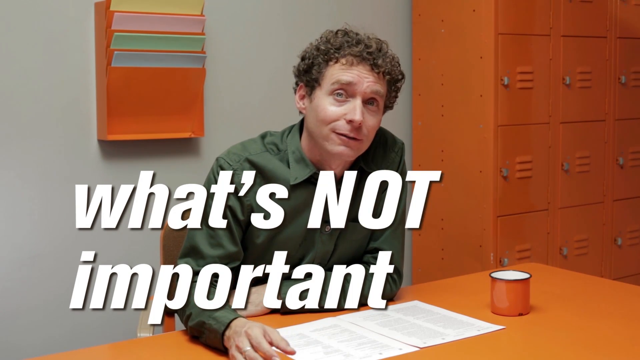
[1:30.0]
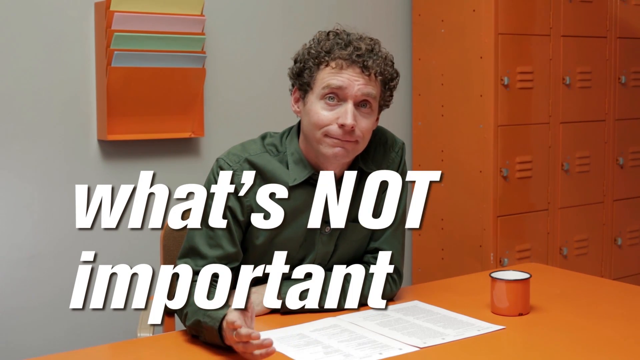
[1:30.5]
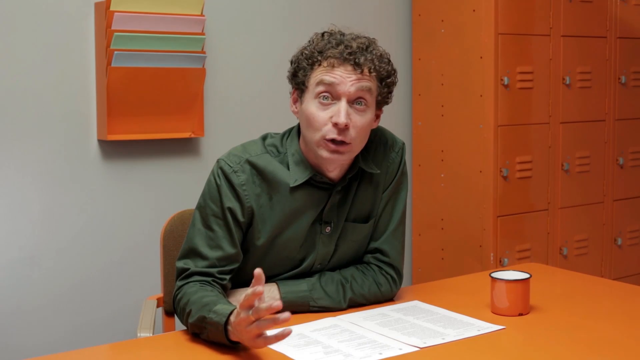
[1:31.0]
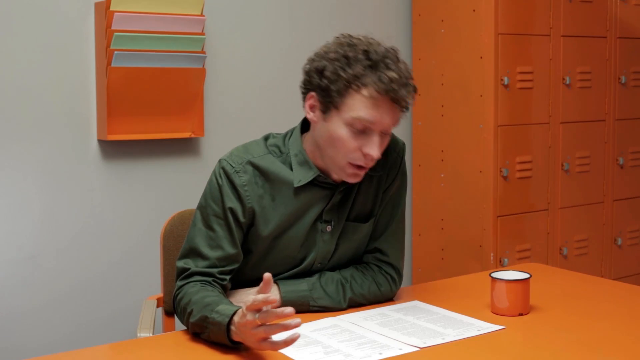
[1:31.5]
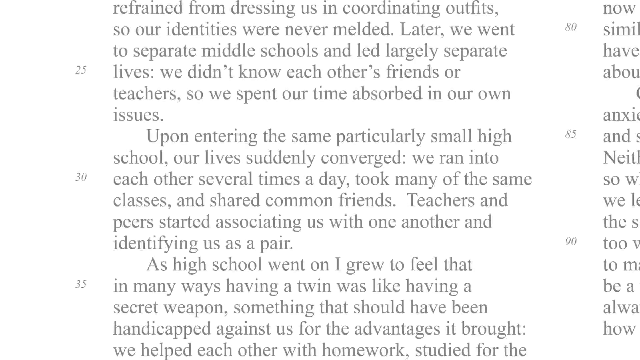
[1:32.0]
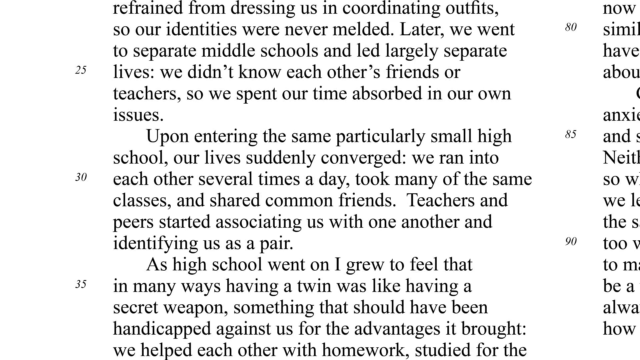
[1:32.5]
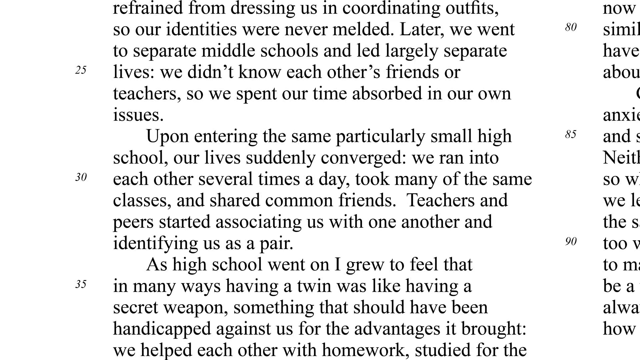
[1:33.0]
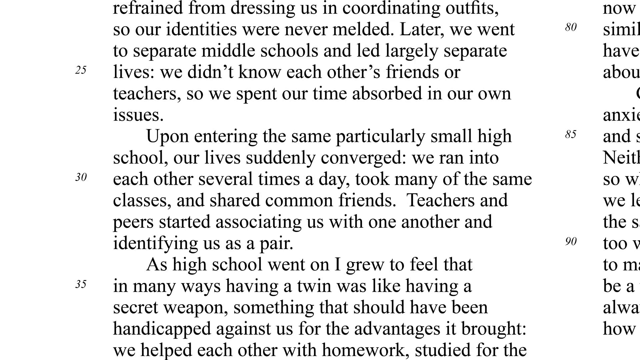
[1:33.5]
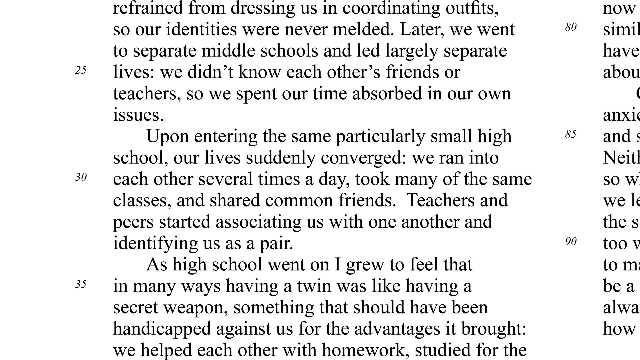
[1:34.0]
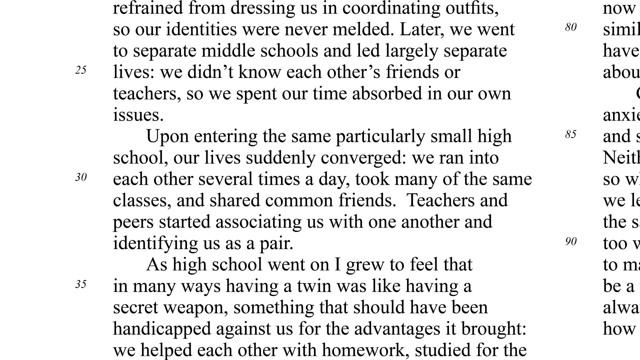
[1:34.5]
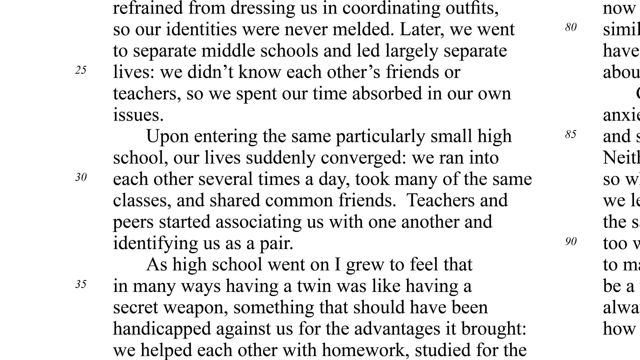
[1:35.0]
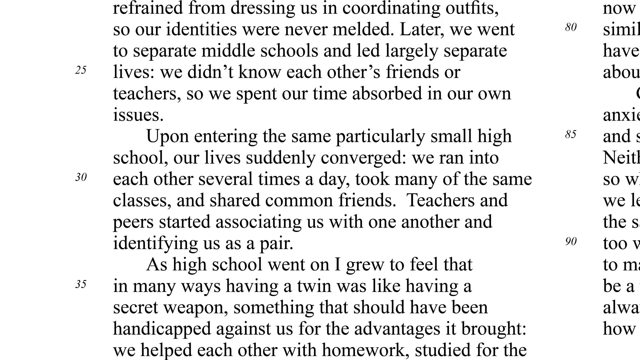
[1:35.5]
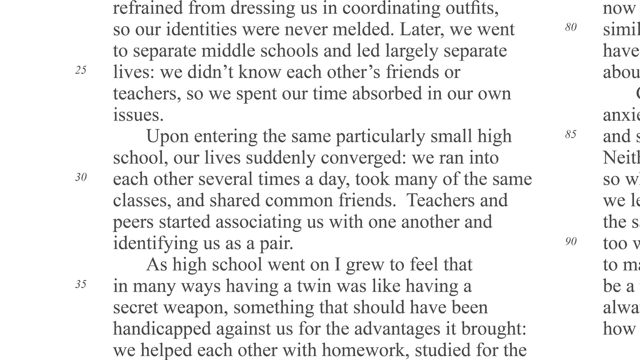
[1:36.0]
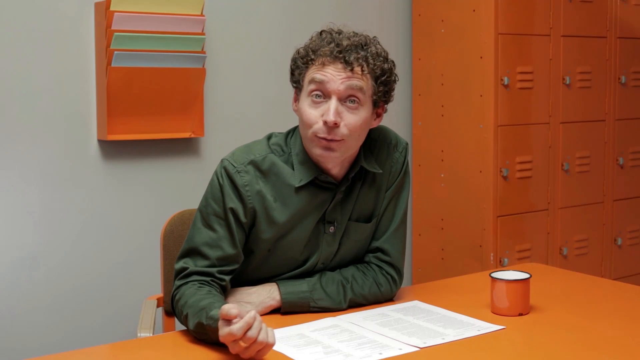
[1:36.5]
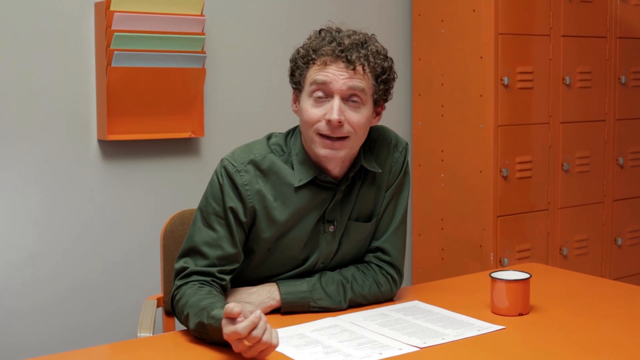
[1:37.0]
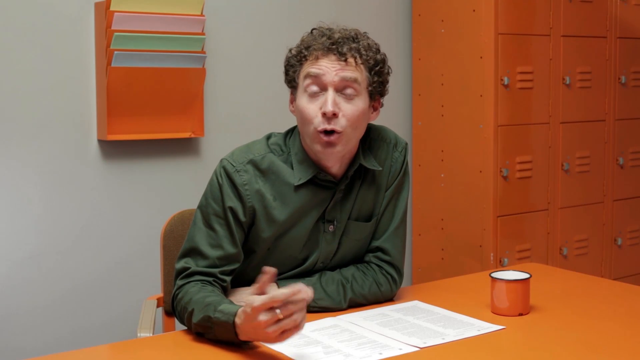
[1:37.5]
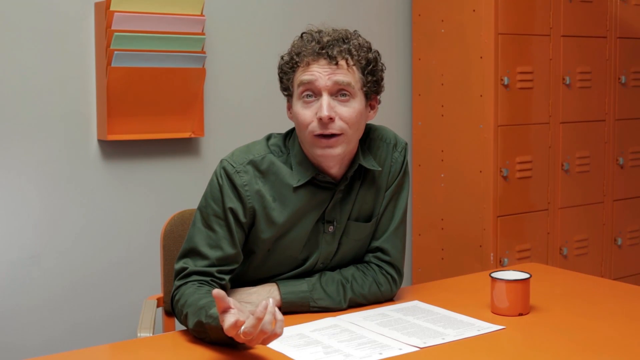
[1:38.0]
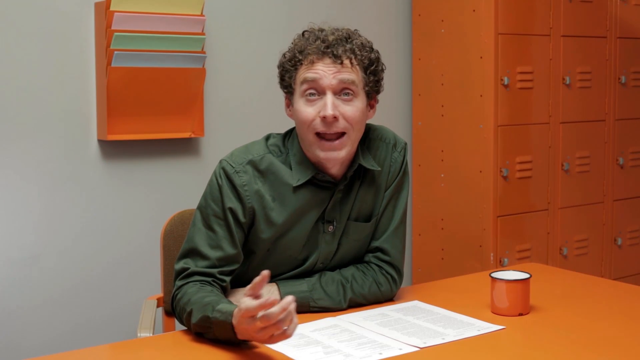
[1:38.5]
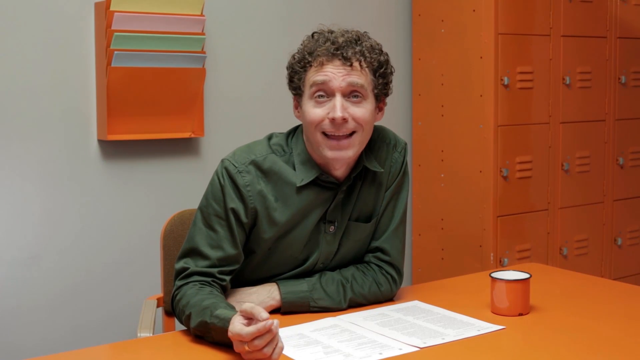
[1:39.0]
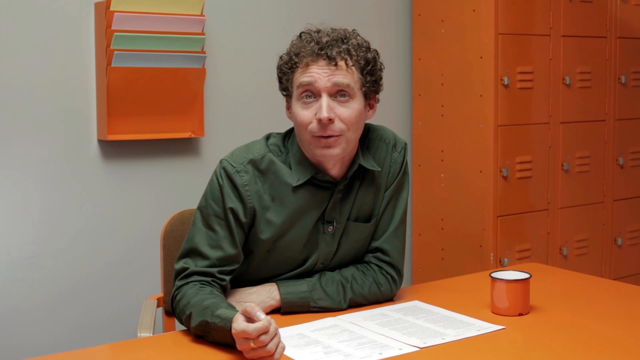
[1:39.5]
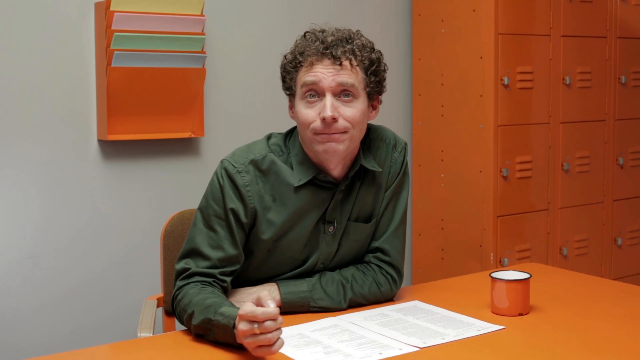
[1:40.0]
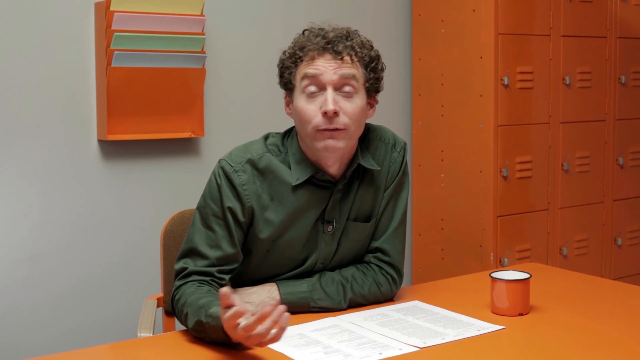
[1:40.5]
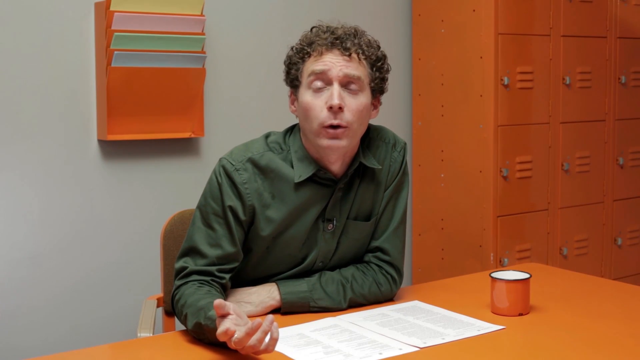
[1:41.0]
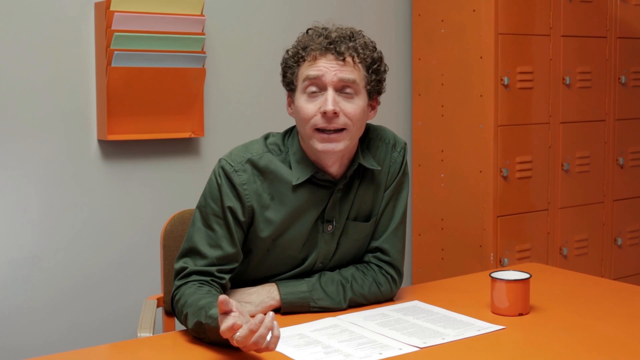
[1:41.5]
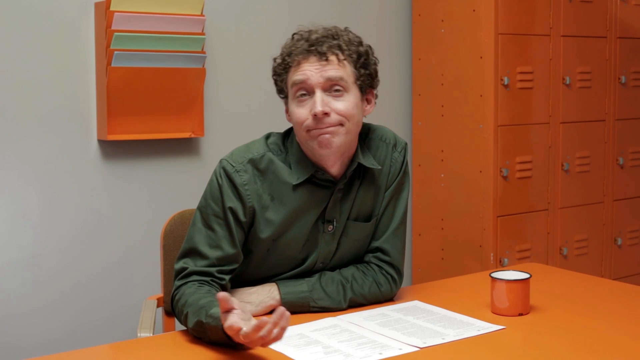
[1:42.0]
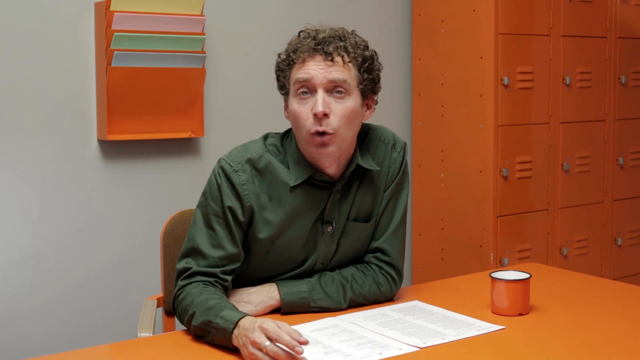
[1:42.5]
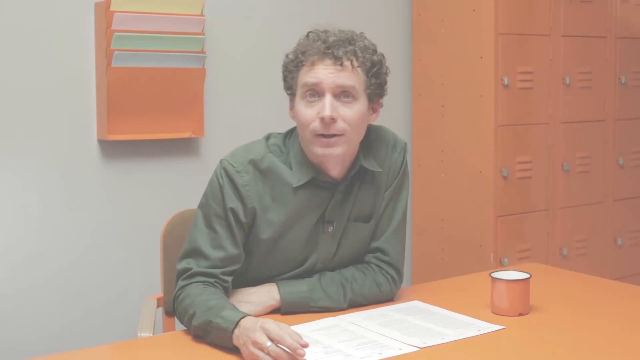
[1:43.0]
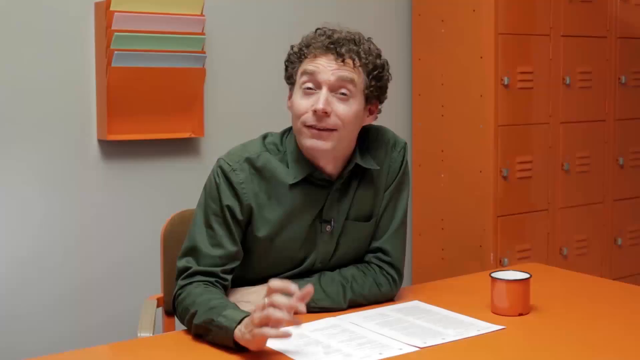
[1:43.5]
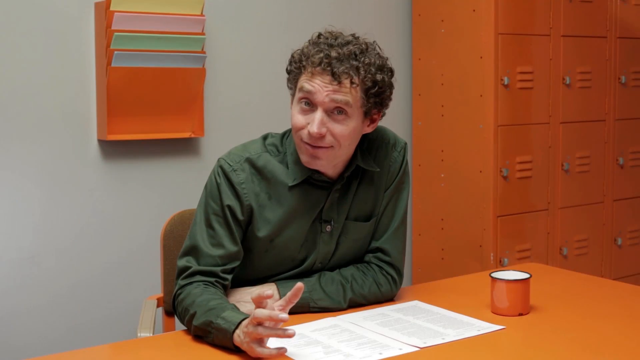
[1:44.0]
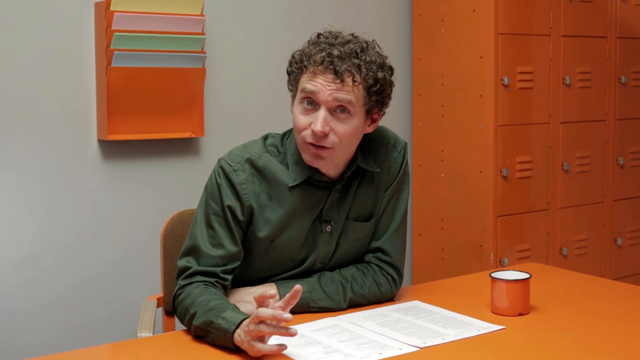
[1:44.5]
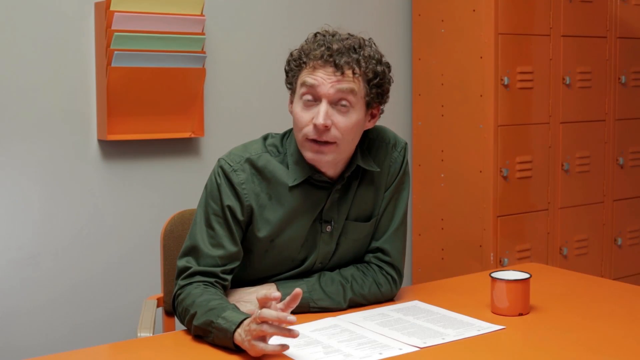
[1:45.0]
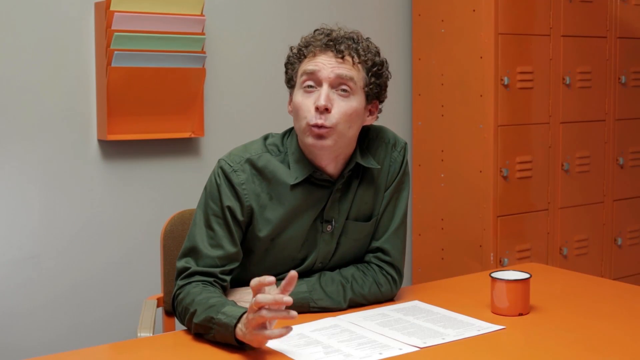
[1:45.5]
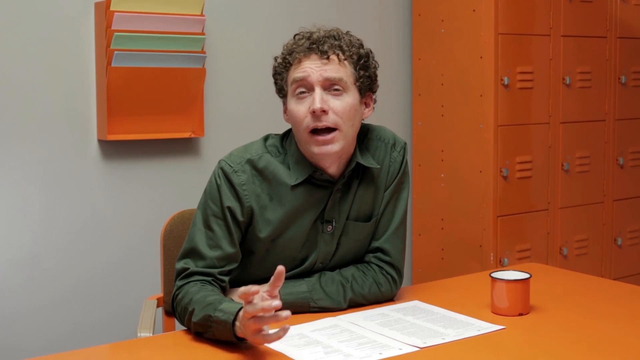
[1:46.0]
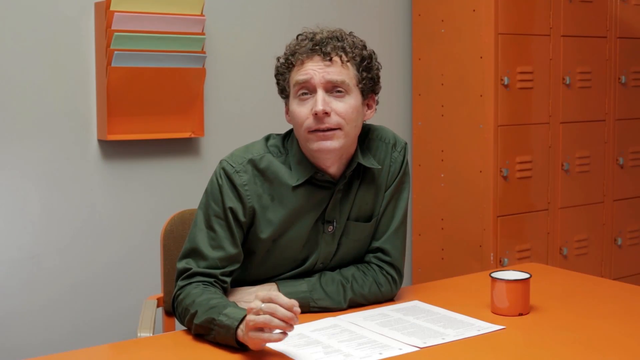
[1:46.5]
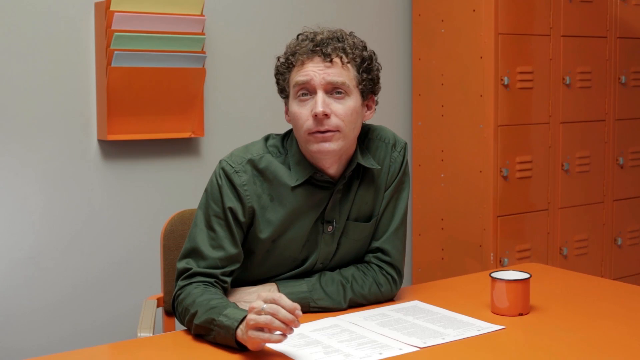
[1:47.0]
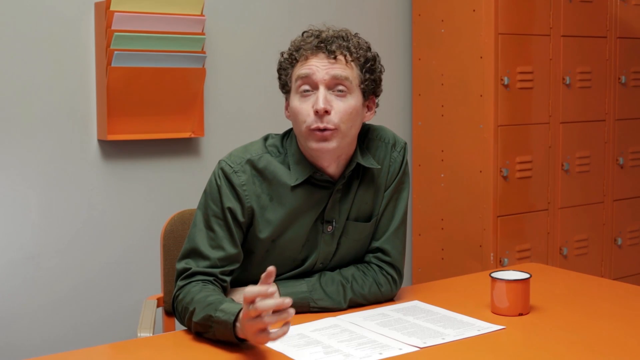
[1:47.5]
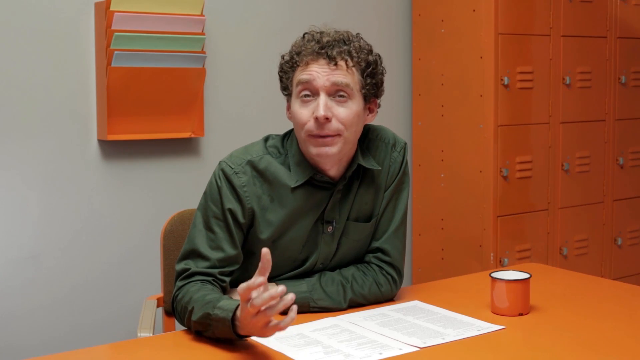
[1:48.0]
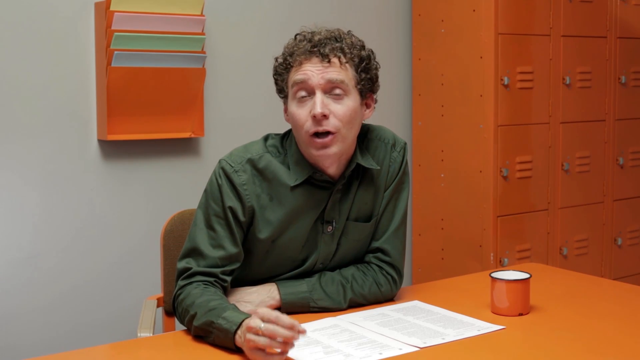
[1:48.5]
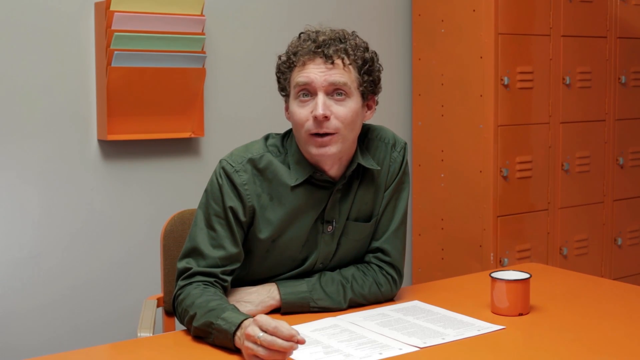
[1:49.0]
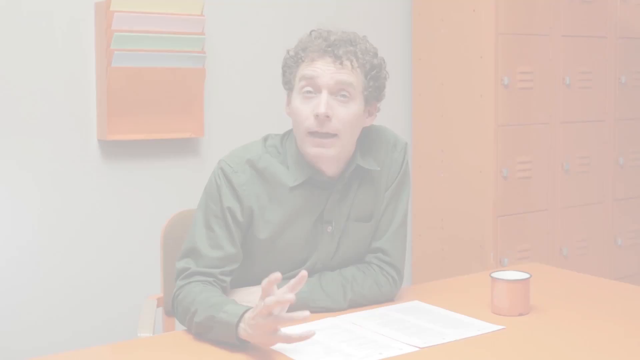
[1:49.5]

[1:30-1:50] A man sits at a desk wearing a green long-sleeve button-up shirt, with his arms resting on the desk, one extended and the other up against his body. To his left is an orange wall-mounted file storage unit holding sheets of different colors, and on the right is an orange locker storage unit with 12 visible lockers. On the desk are an orange mug with a white inside and two sheets of paper with columned text. He is a clean-shaven white male with short brown curly hair. The words "what's not important" are on the screen in large white letters. The man talks, and the words disappear. The view then zooms in on one column of a document with various text, then returns to the man in the green shirt, who continues to talk, his extended hand gesturing slightly the whole time. There are quick white transitions, and the man continues to talk.